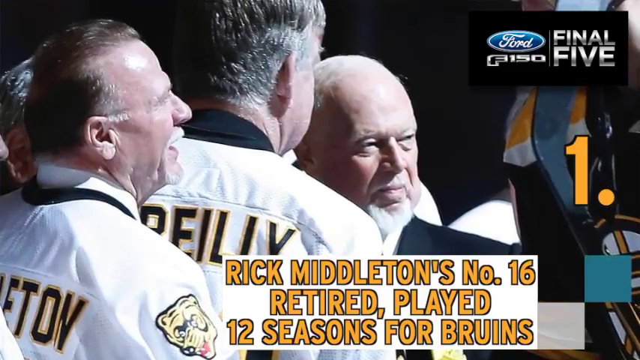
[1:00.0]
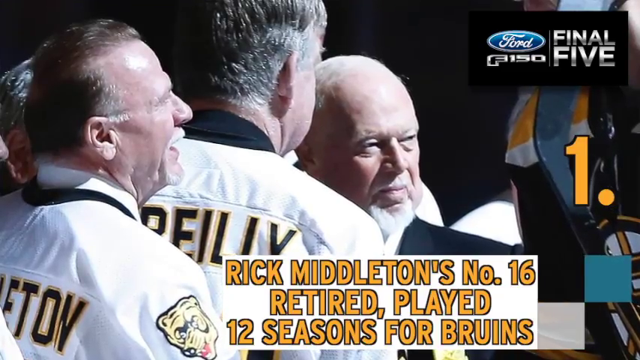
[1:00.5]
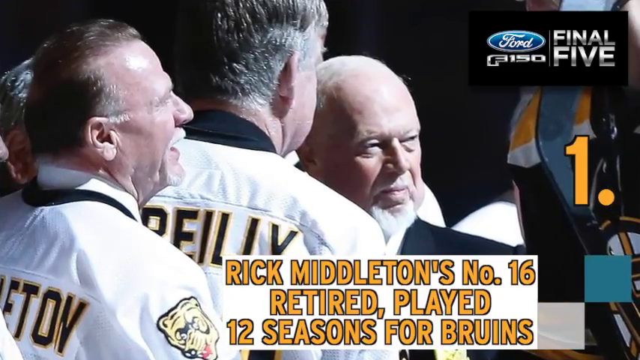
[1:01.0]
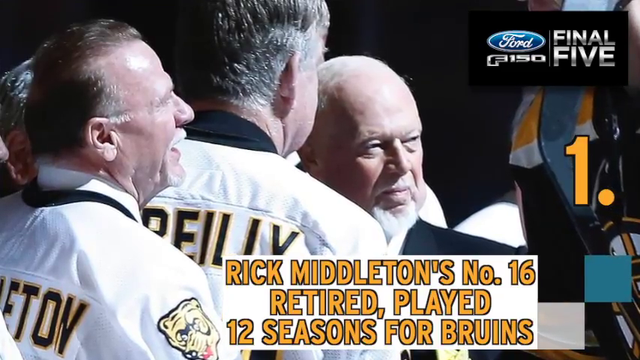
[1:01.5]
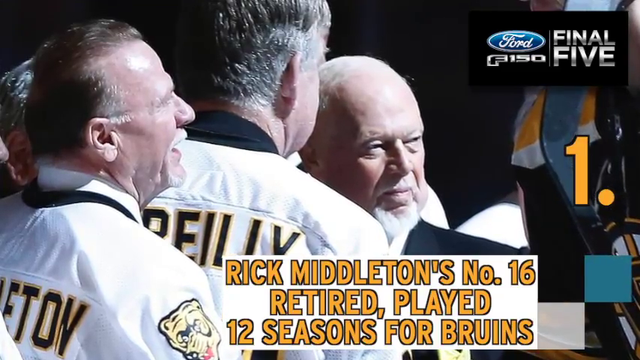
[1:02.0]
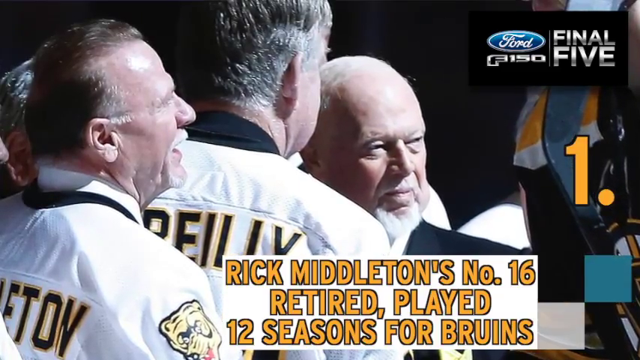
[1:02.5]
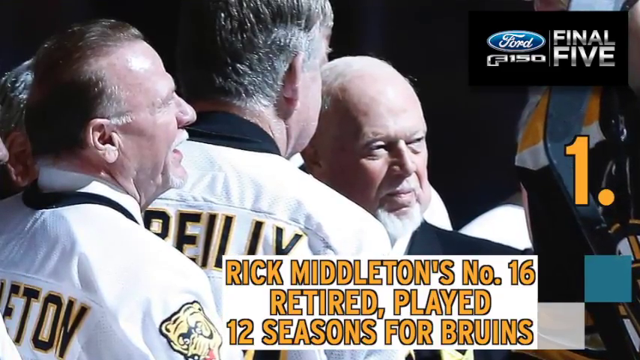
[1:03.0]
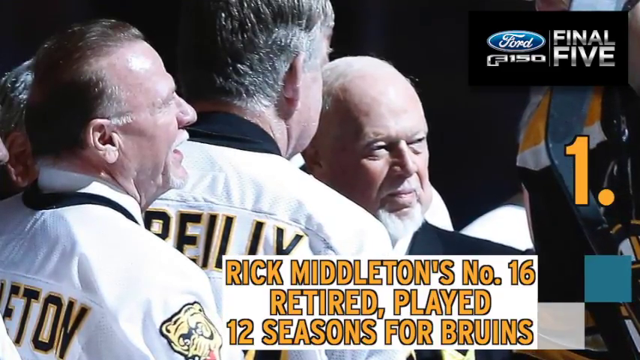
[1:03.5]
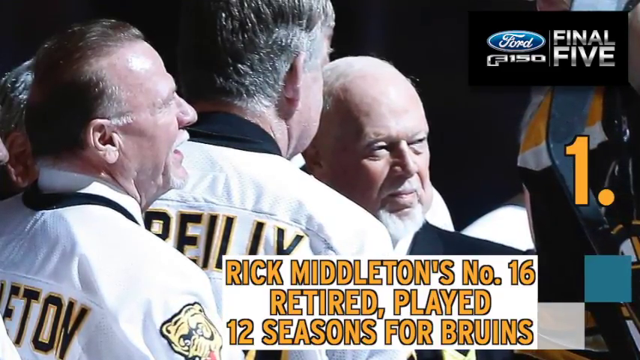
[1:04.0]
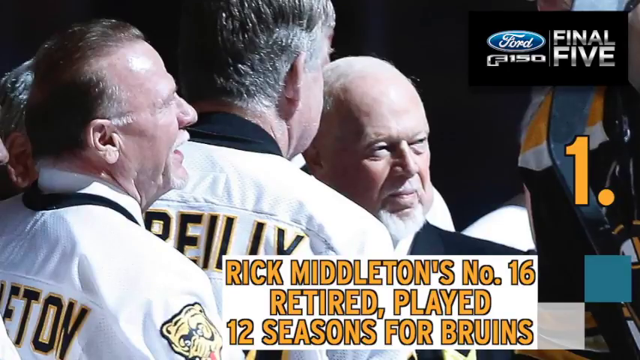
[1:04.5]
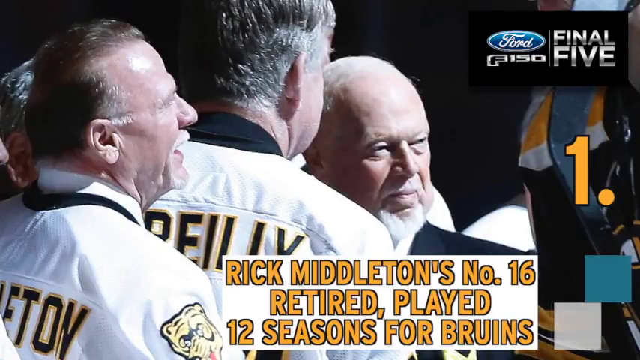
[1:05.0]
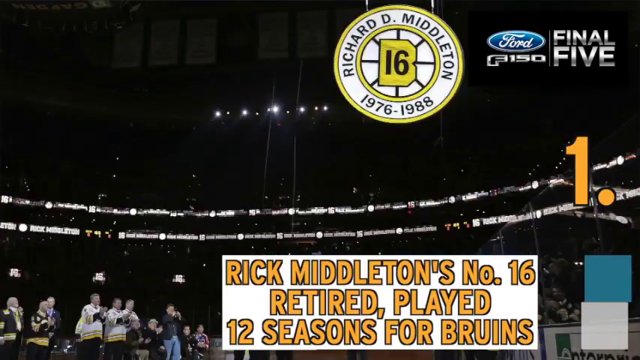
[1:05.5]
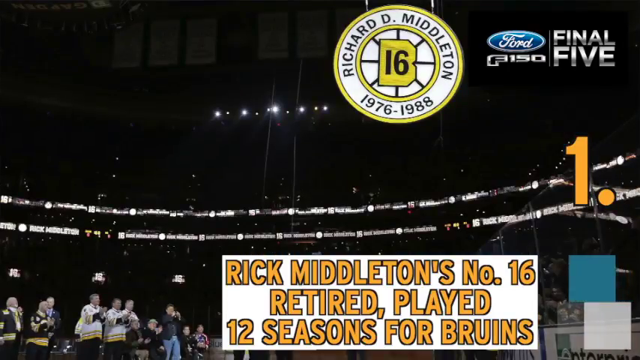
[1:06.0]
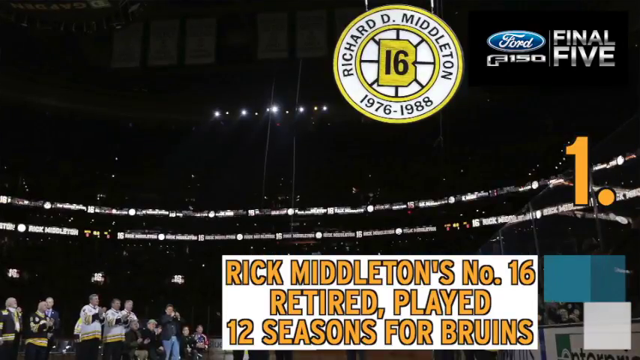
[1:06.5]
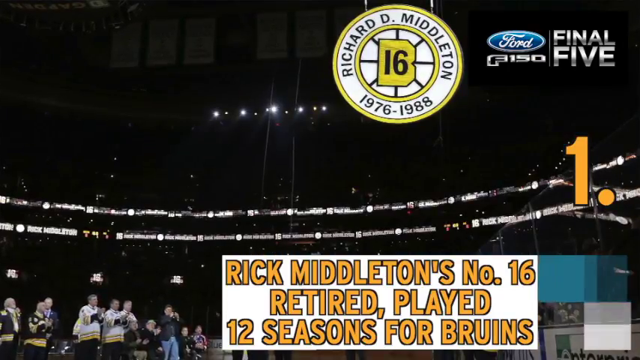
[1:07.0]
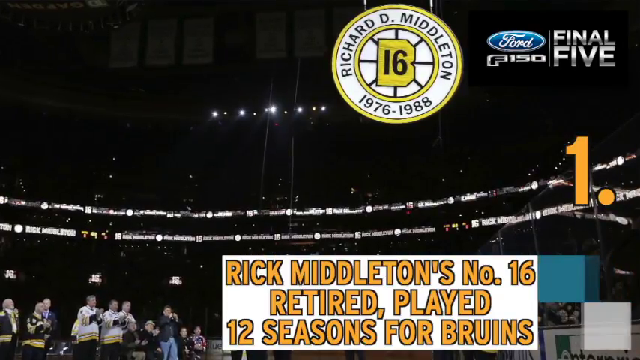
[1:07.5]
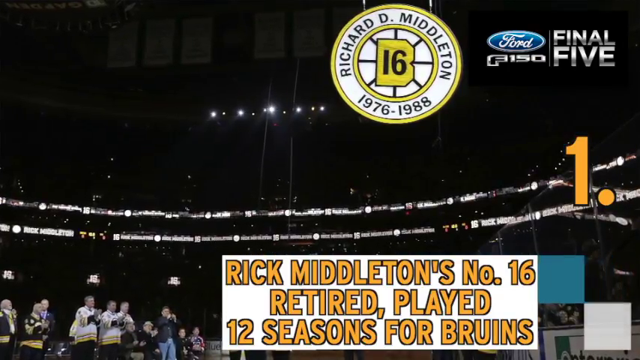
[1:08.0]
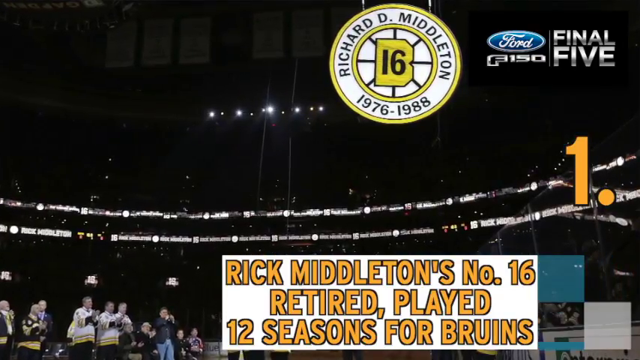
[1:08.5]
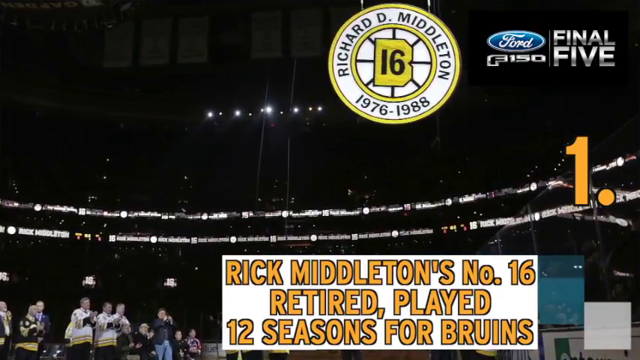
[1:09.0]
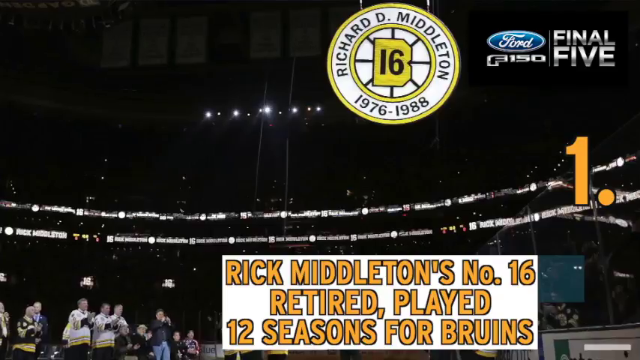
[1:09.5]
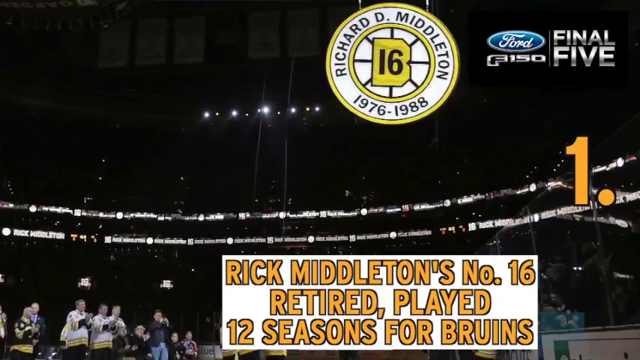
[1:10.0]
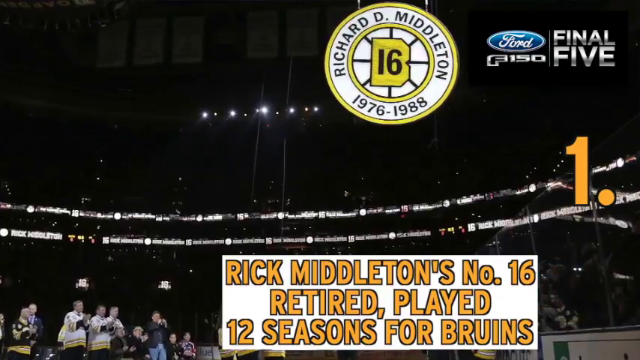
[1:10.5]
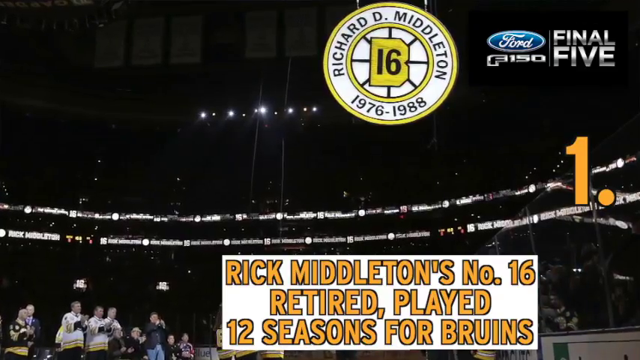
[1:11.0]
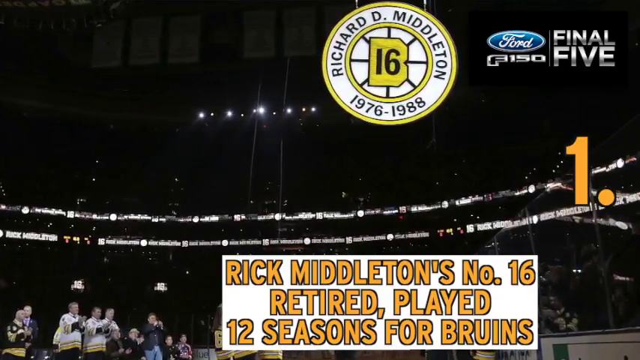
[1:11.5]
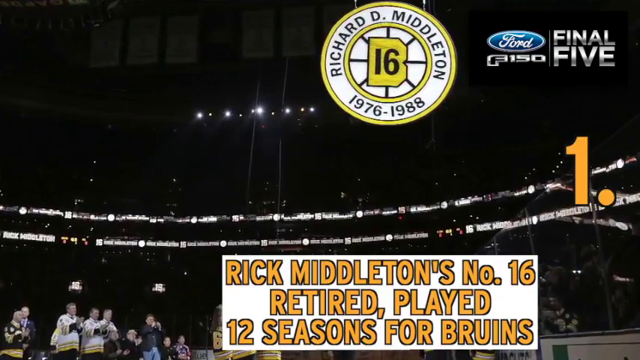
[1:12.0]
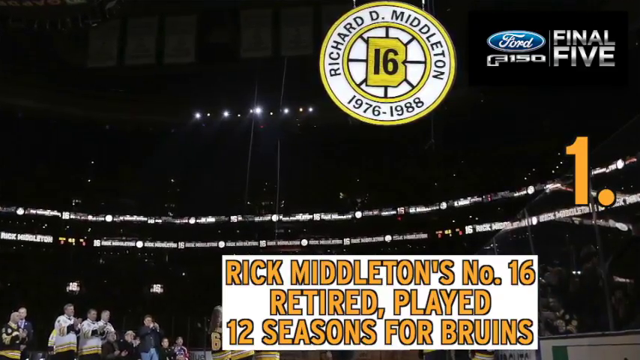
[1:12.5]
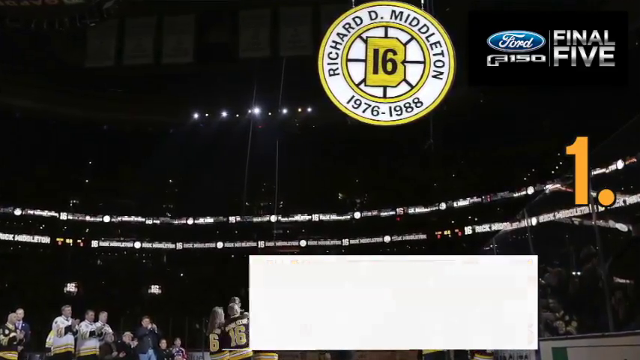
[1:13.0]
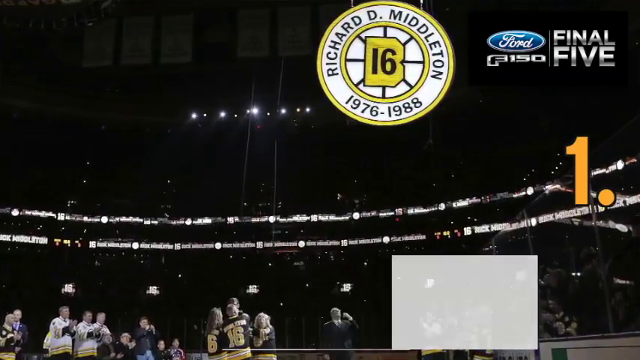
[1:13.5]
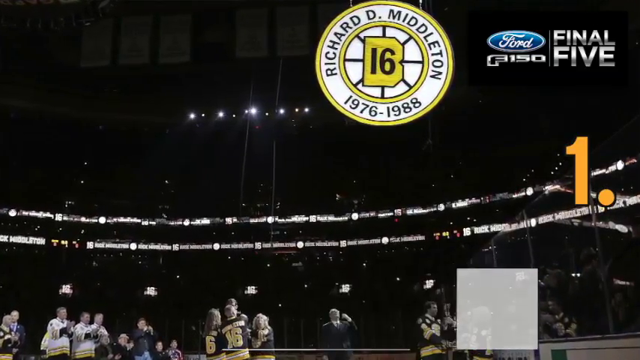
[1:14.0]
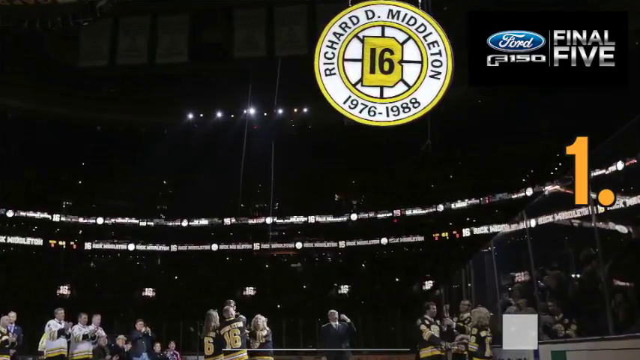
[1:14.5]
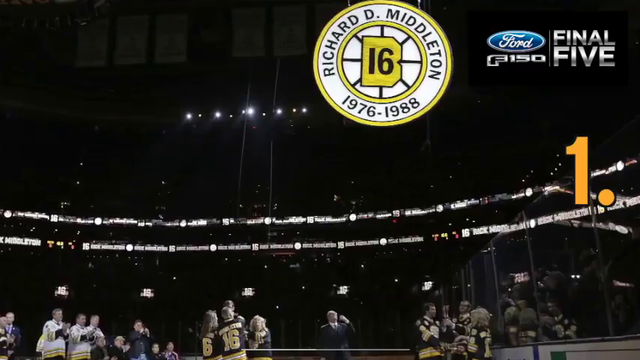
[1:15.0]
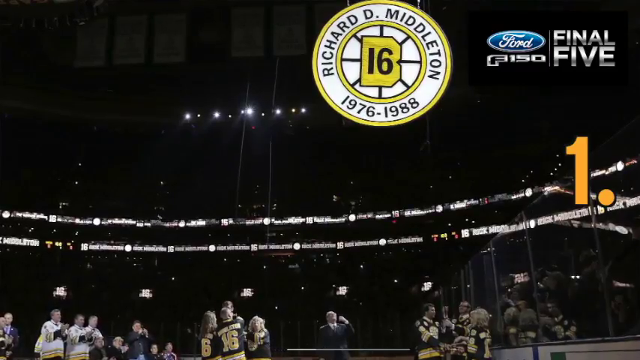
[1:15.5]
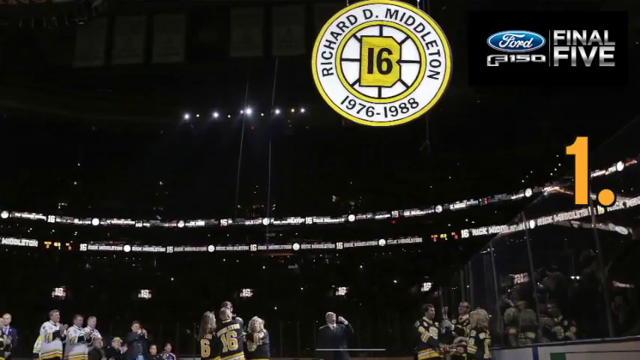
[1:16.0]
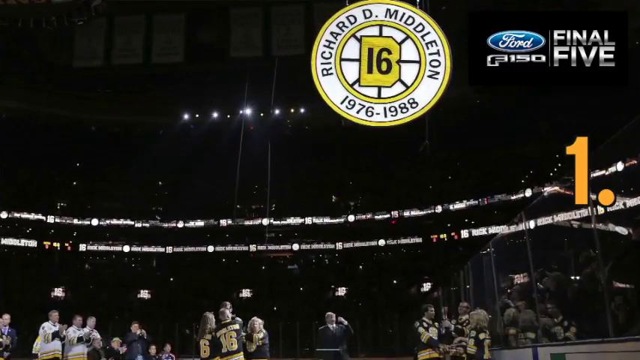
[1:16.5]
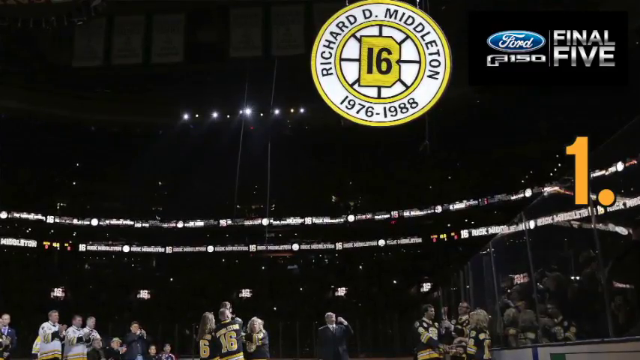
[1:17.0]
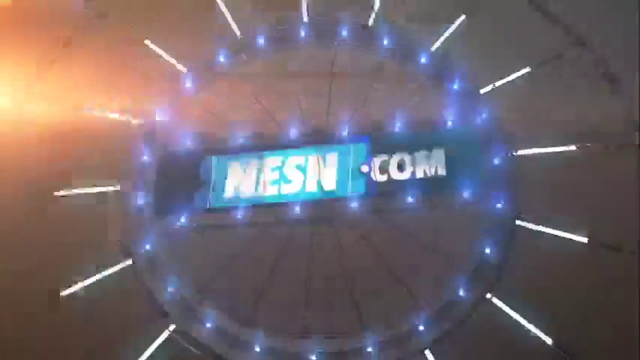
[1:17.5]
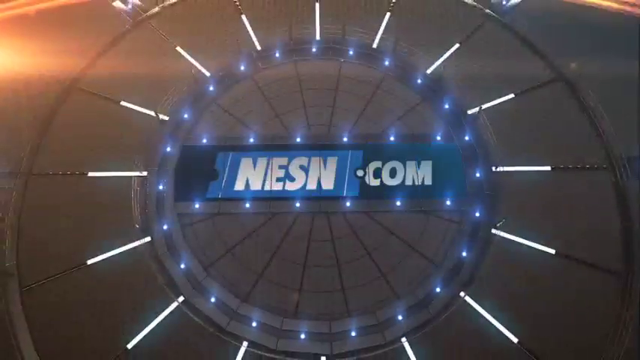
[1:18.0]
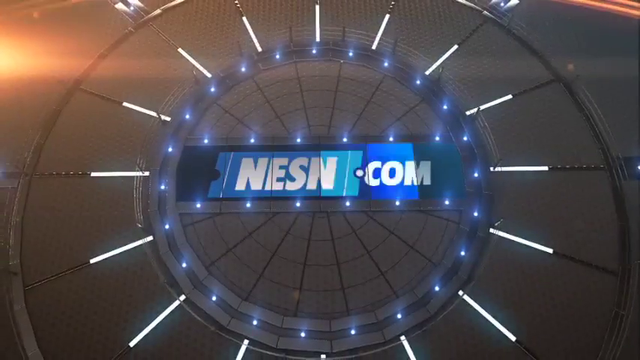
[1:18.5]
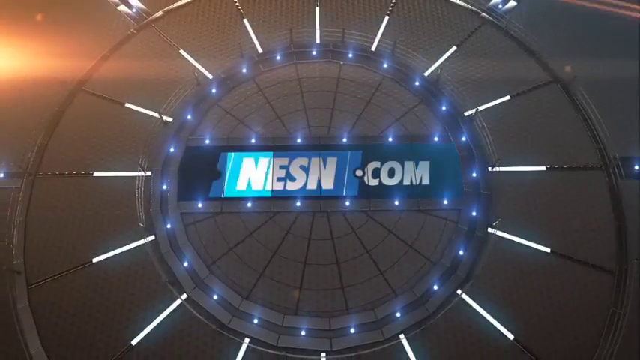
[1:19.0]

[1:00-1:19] Yellow text reads "Rick Middleton, number 16, retired. Played 12 seasons for the Bruins," with the number 1 on the right and "F-150 Final Five" shown. Older players are lined up in white jerseys, with a man in a suit in front. His banner hangs from the top: a circular banner reading "Richard D. Middleton," with the number 16 on the B of what looks like the Bruins logo and "1976 to 1988" at the bottom. The text stays at the bottom as the view zooms into the banner. The stands and the dark stadium are visible, with lights on the banner and some fans in the back. Then a new scene shows "NESN.com" flashing over a logo that looks metallic, with a blue flash over it.